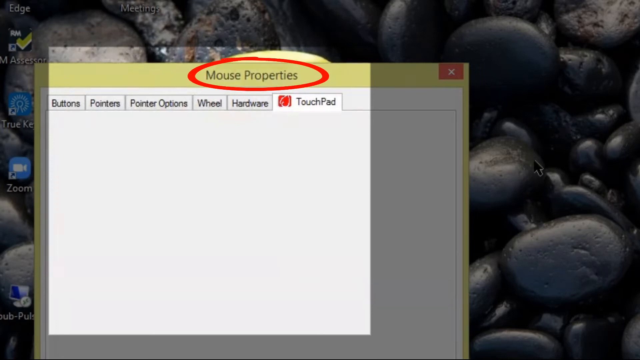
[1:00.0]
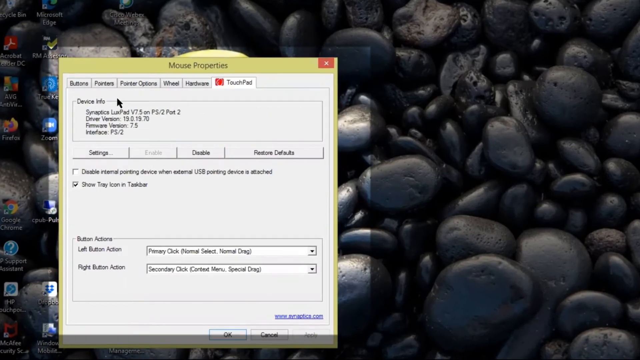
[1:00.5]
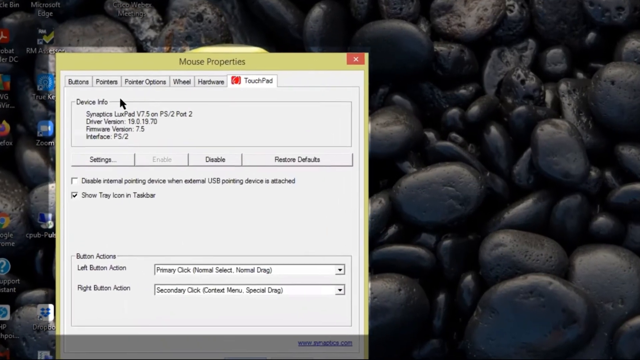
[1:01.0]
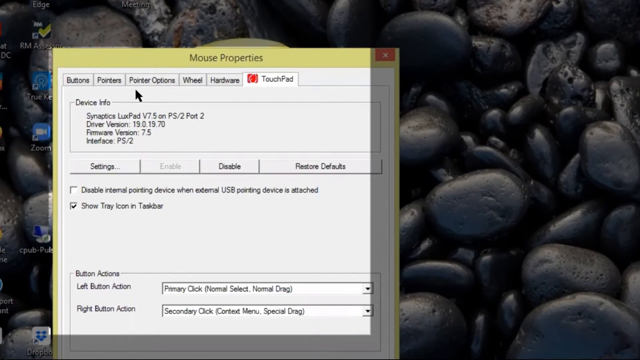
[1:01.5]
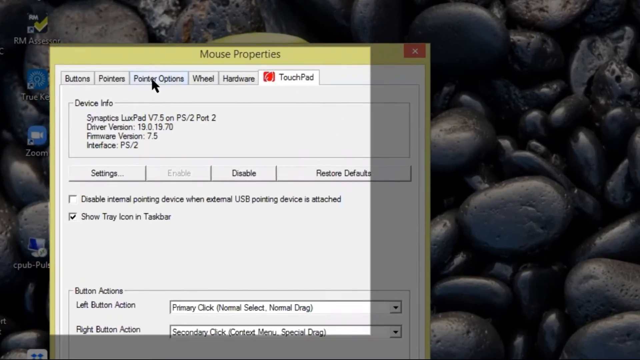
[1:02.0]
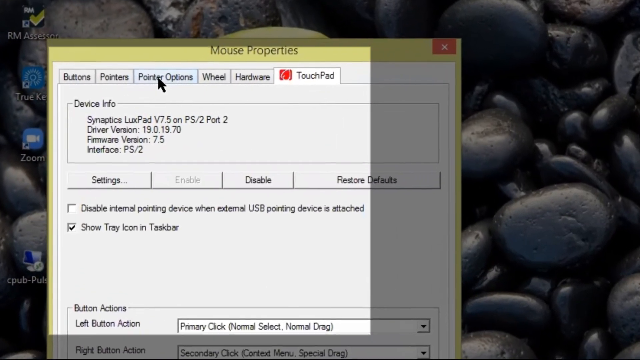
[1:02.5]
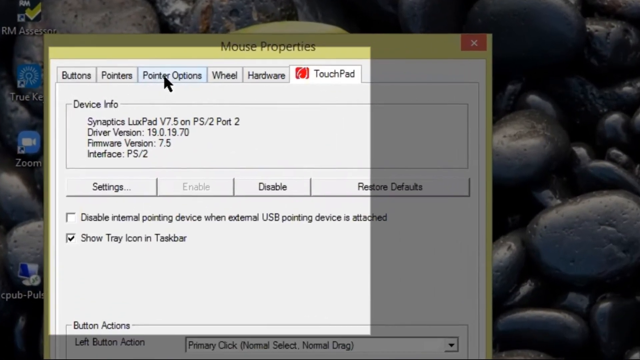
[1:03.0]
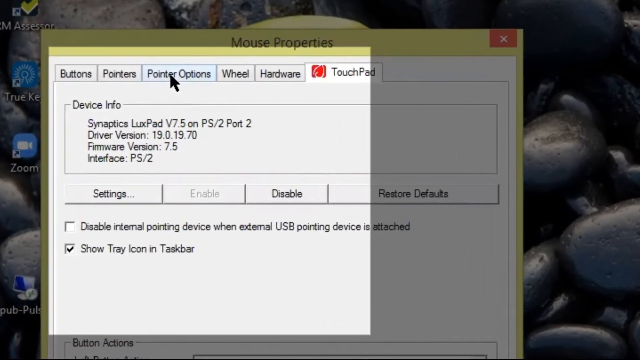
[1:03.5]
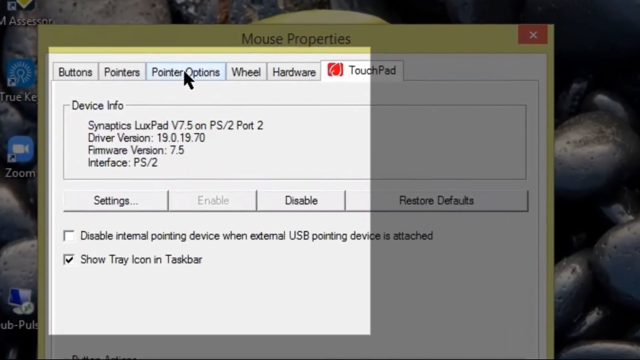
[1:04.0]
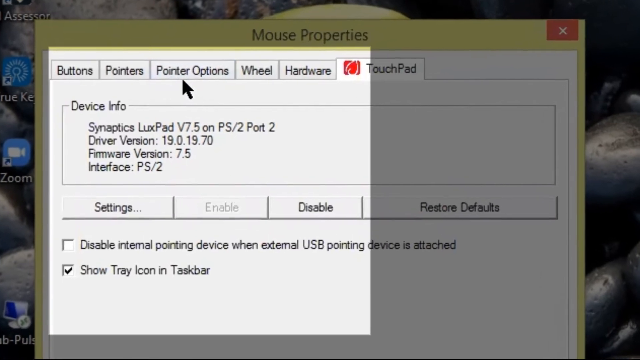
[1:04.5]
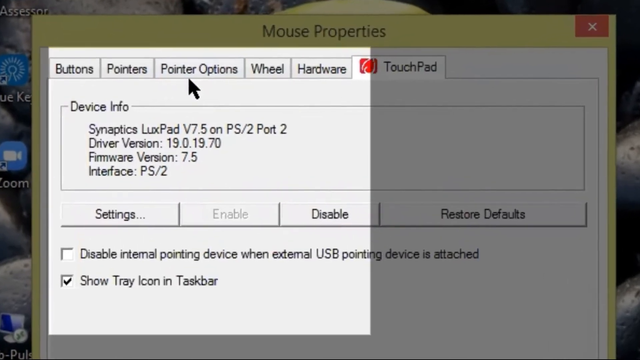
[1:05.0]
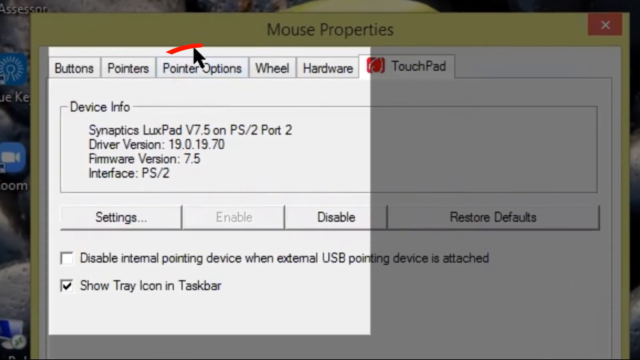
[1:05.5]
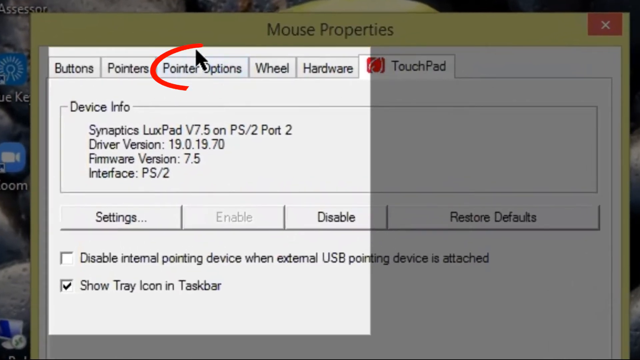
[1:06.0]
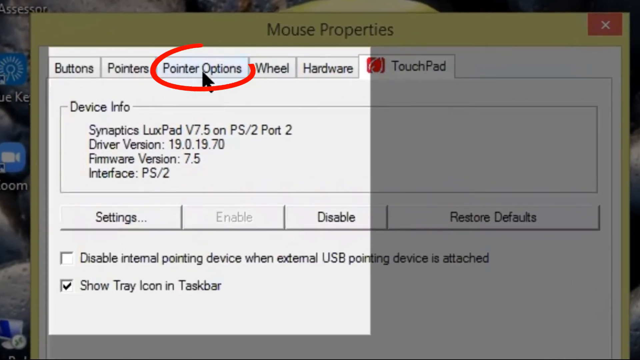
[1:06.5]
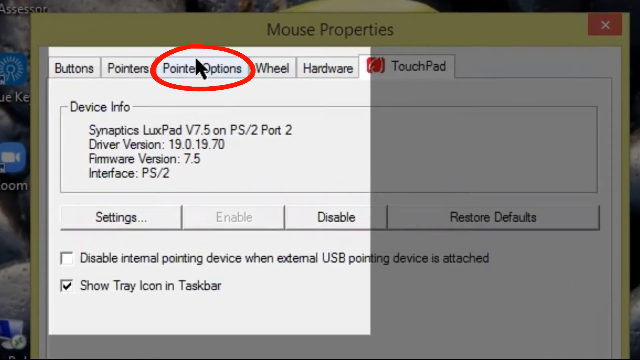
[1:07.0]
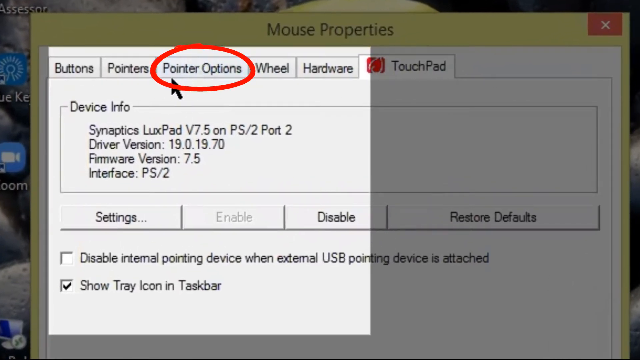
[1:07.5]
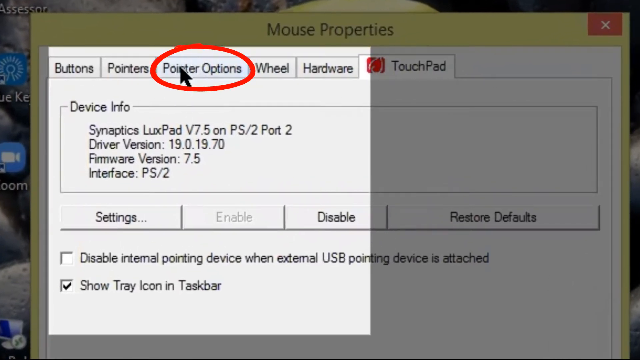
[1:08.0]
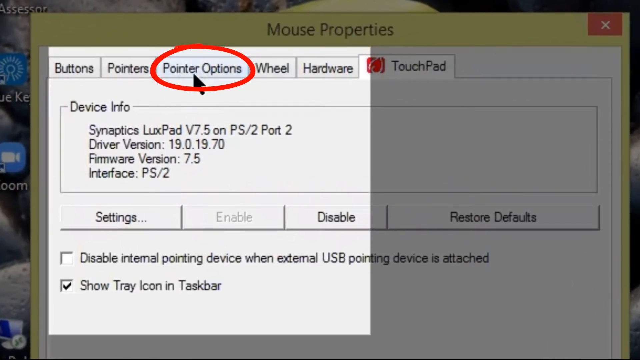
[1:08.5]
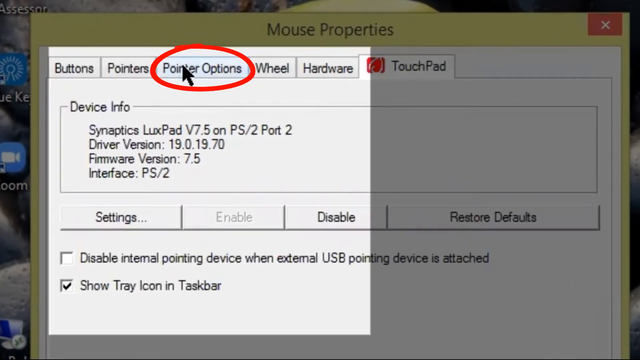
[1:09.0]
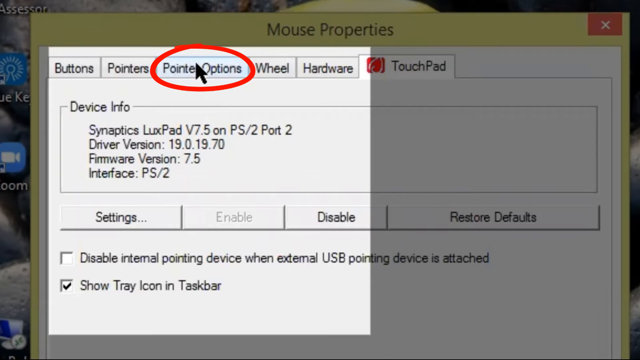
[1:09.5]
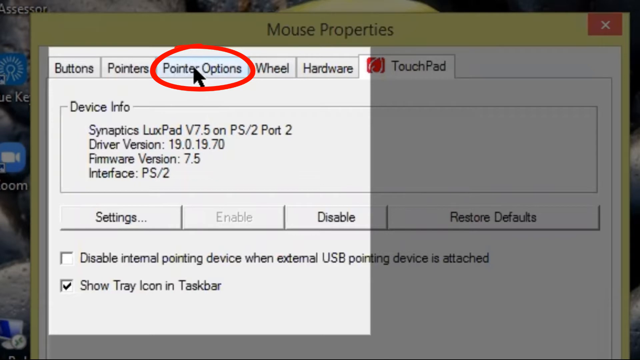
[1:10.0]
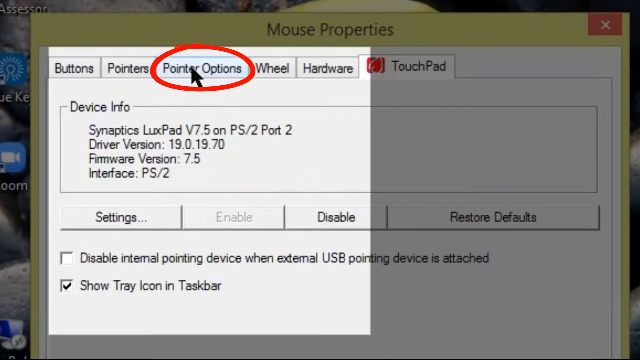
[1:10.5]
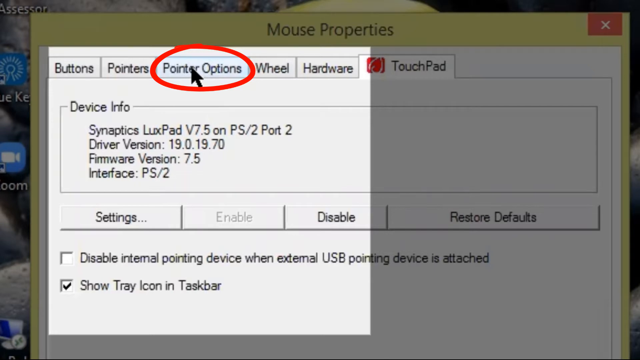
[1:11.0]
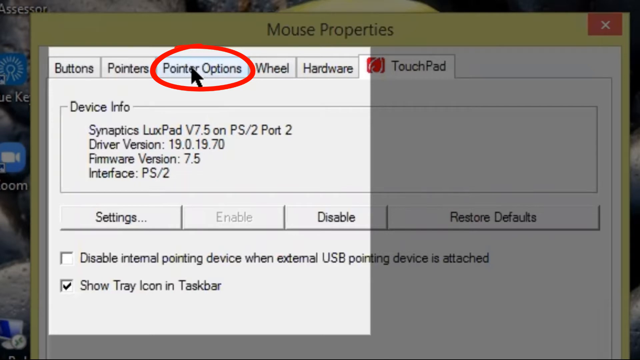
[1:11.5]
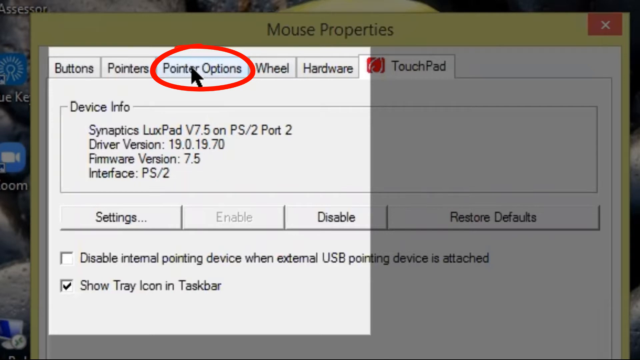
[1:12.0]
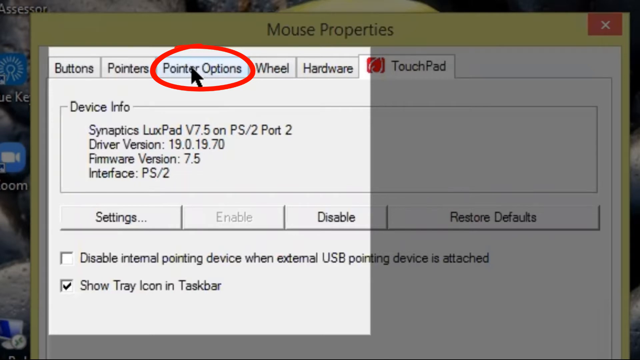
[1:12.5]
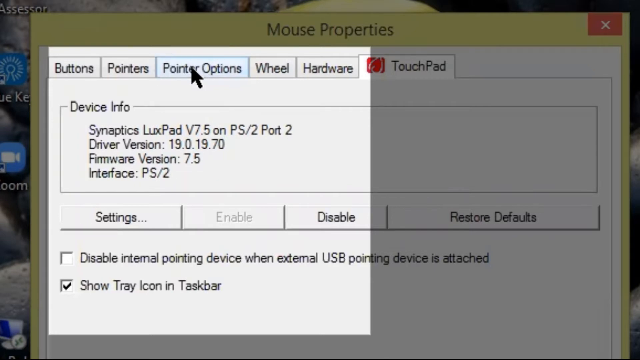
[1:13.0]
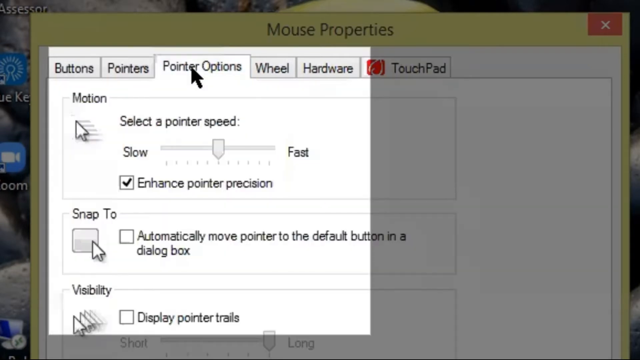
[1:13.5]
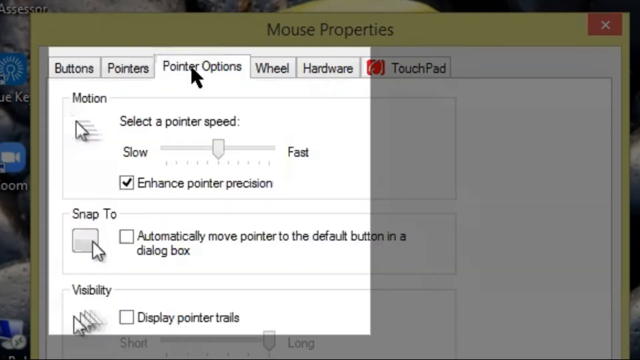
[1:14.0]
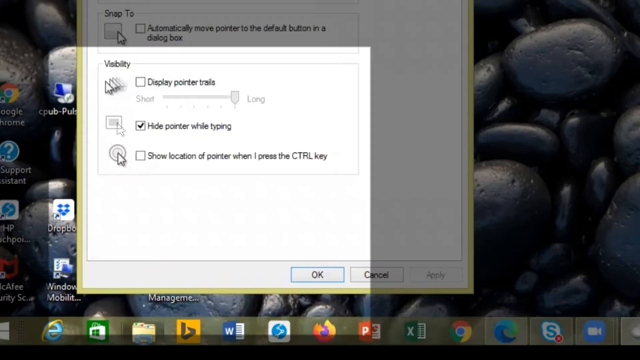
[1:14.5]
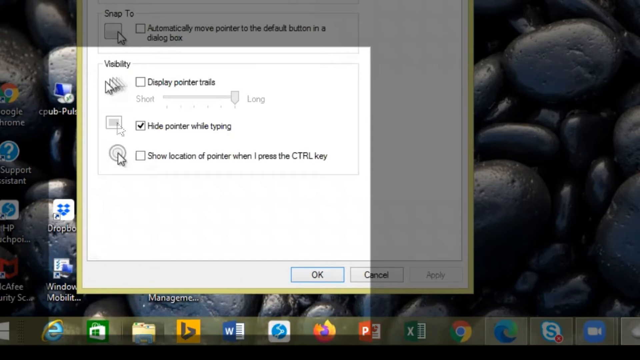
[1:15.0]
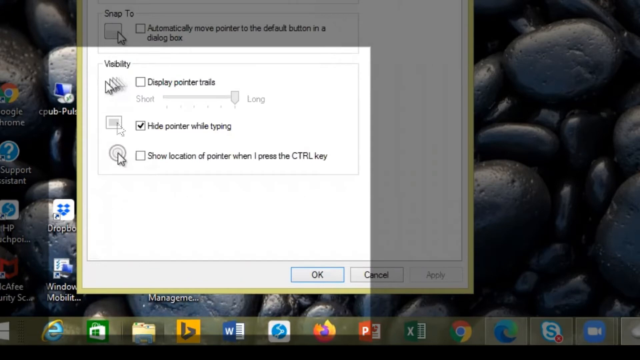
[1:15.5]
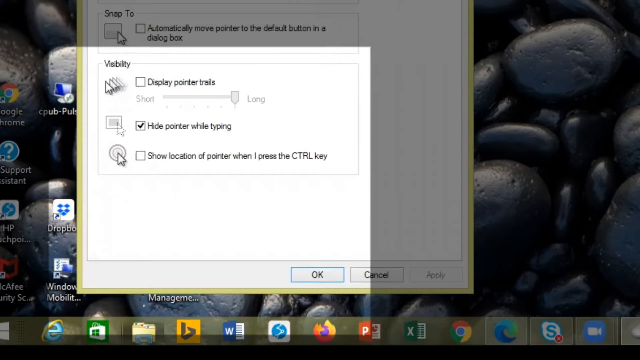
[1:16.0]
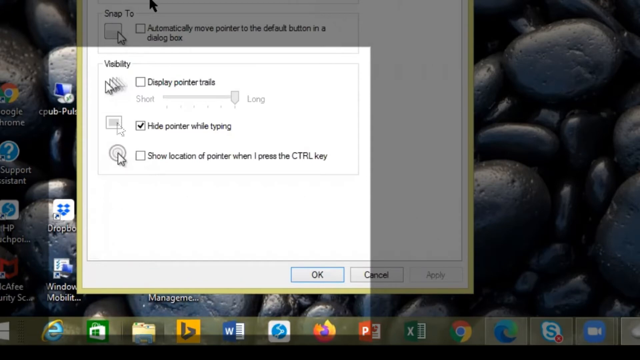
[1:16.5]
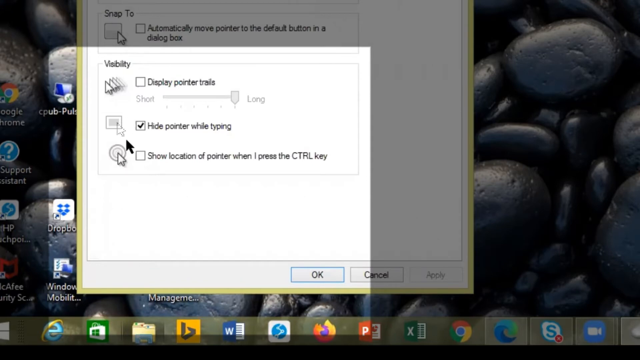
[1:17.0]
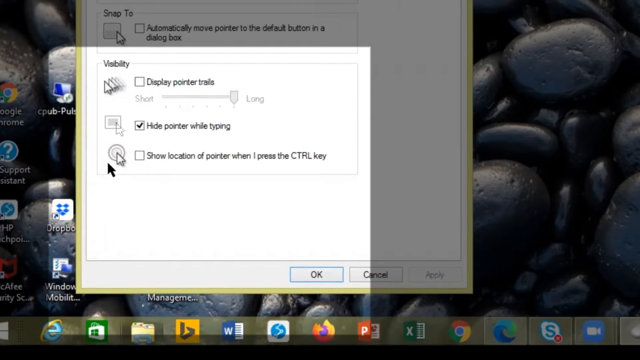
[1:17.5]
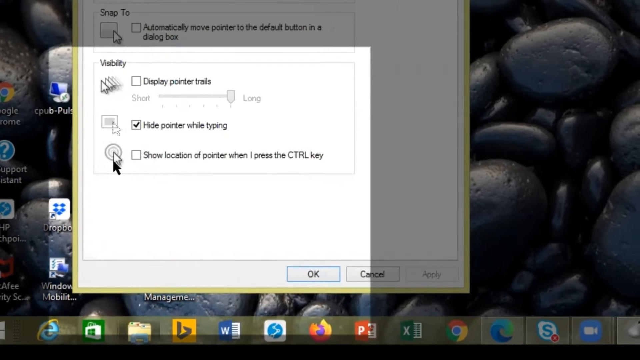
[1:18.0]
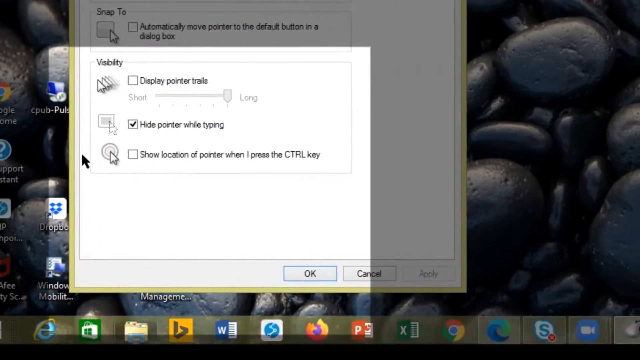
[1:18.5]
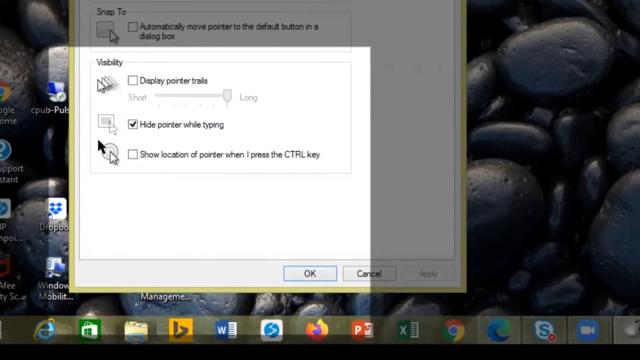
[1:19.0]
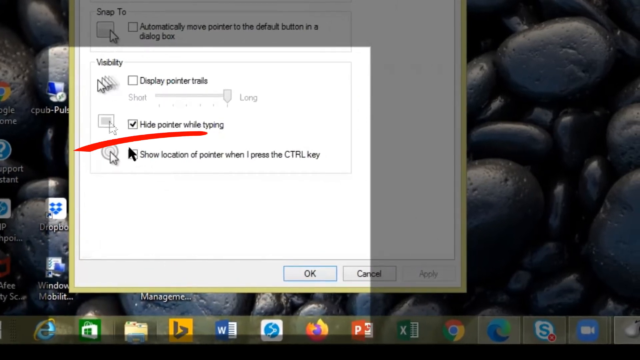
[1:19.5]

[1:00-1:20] The mouse properties pop-up is on screen, and the view zooms in on it. A red circle appears, apparently indicating the touchpad option. The view zooms in even more, apparently on another option to click, pointer options. The cursor kind of highlights it, and pointer options is circled in red. It is clicked, and a zoom feature is used along with a square-shaped, flashlight-like highlight. Visibility options come up: "display pointer trails", "hide pointer while typing", and "show location of pointer when I press the control key", with the hide pointer option checked. The "show location of pointer when I press the control key" option is circled with a red line.